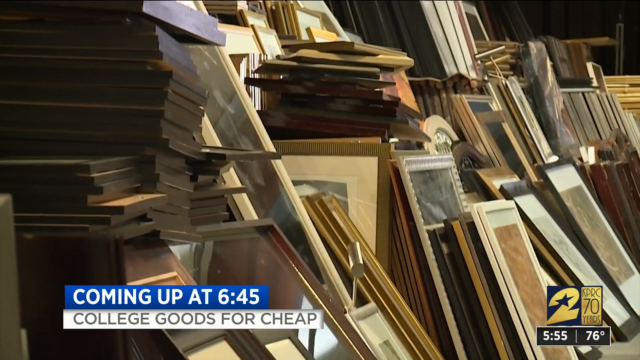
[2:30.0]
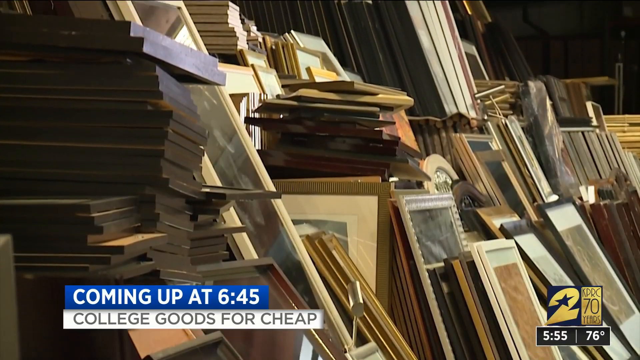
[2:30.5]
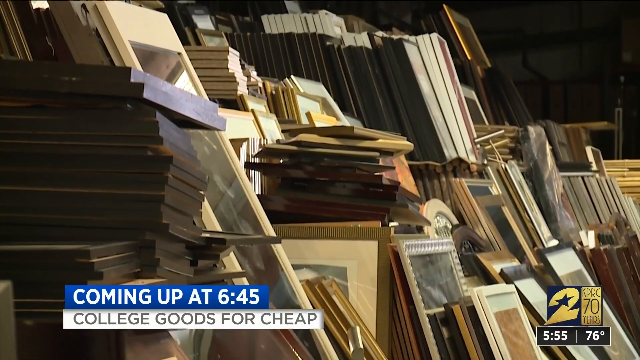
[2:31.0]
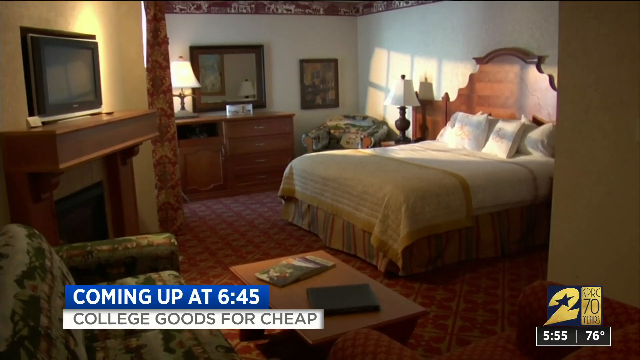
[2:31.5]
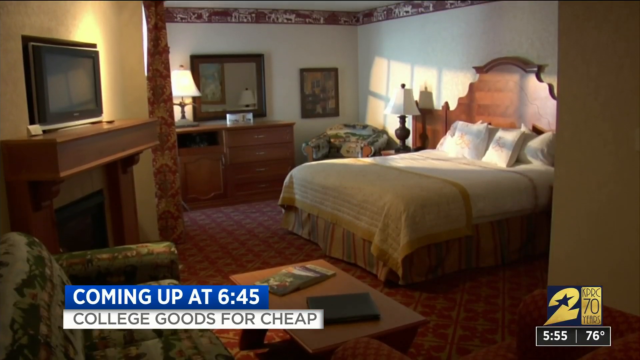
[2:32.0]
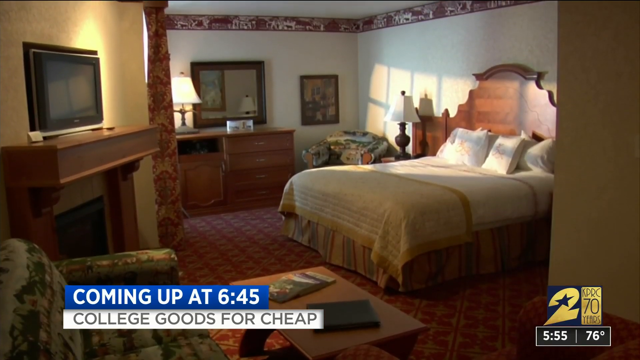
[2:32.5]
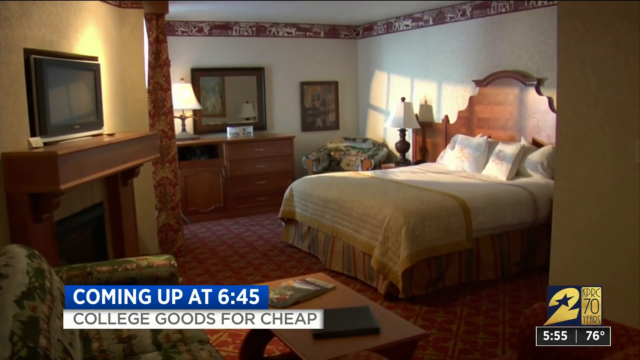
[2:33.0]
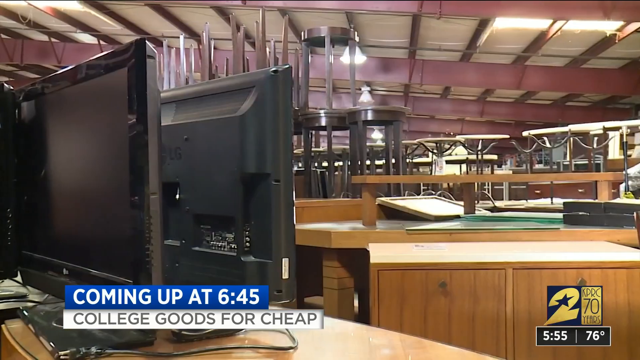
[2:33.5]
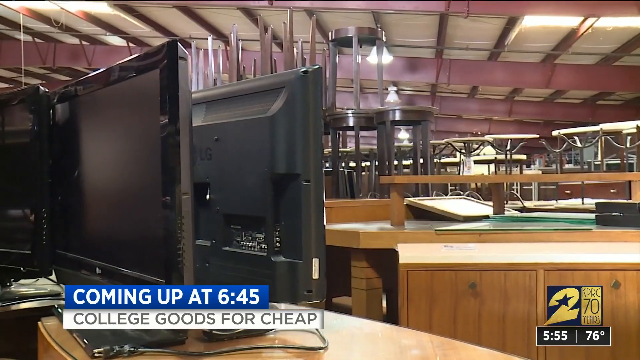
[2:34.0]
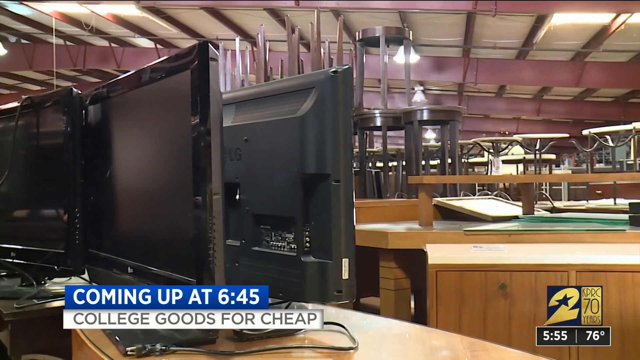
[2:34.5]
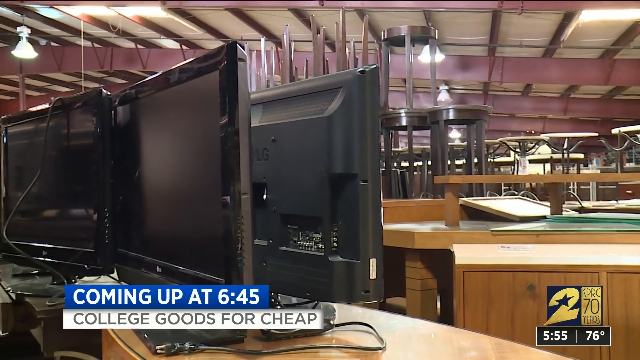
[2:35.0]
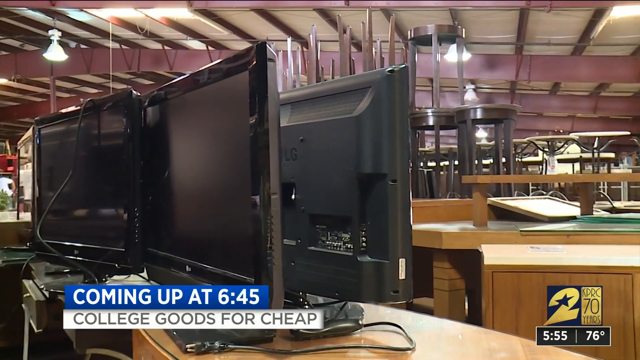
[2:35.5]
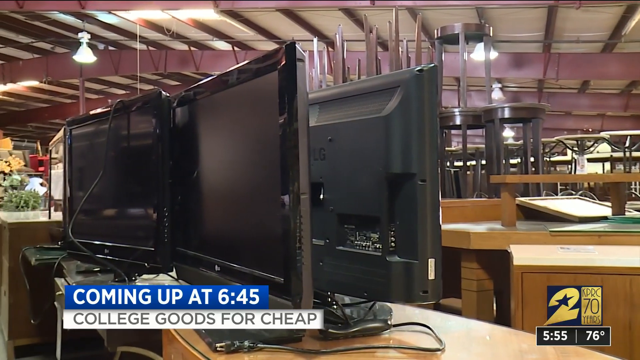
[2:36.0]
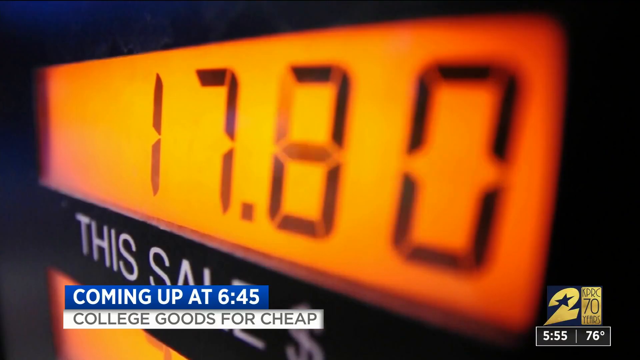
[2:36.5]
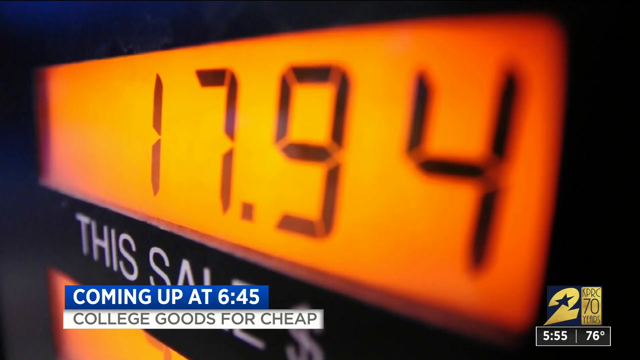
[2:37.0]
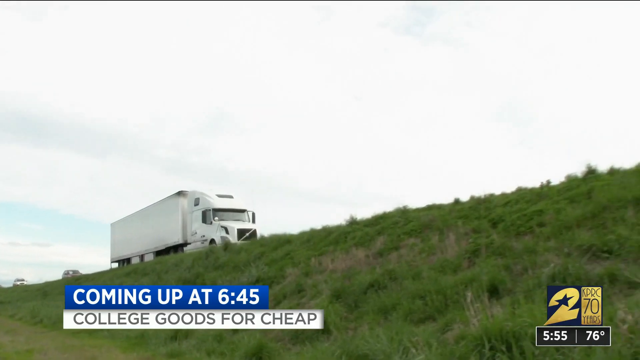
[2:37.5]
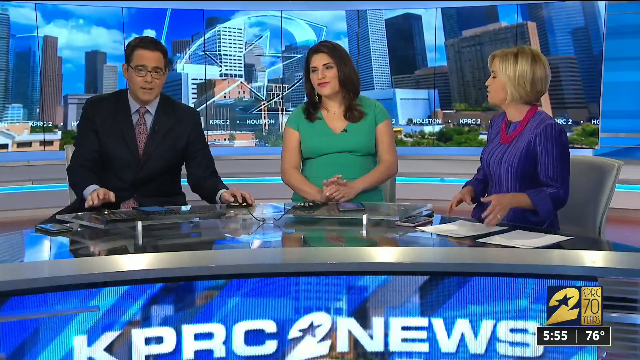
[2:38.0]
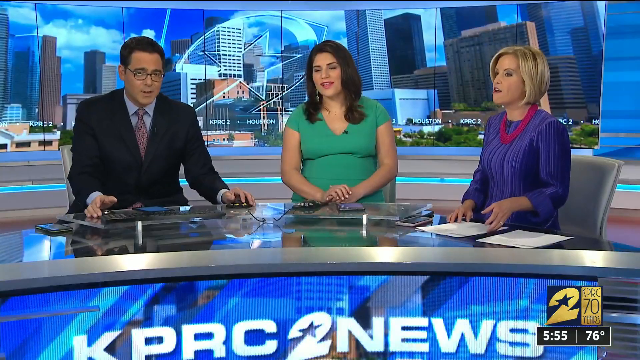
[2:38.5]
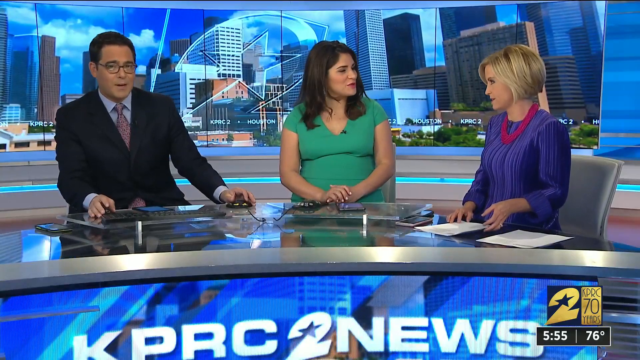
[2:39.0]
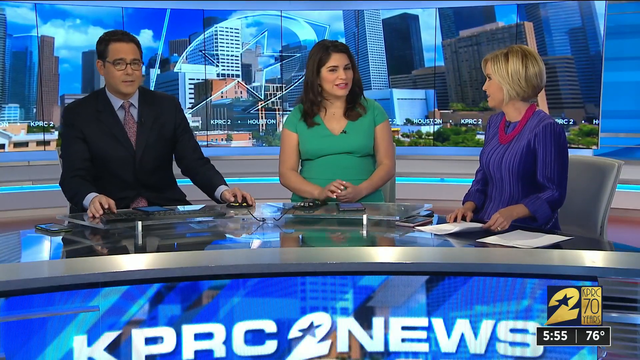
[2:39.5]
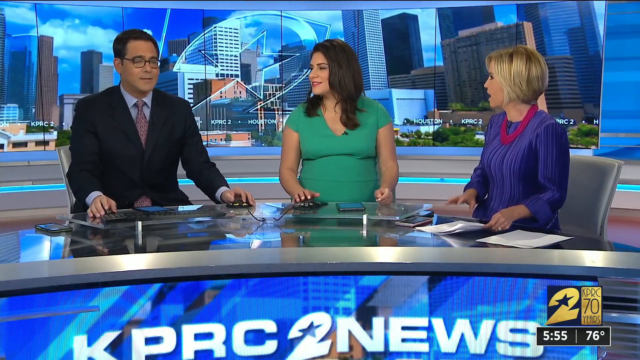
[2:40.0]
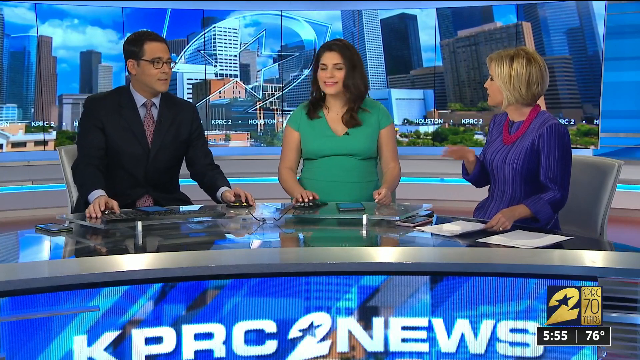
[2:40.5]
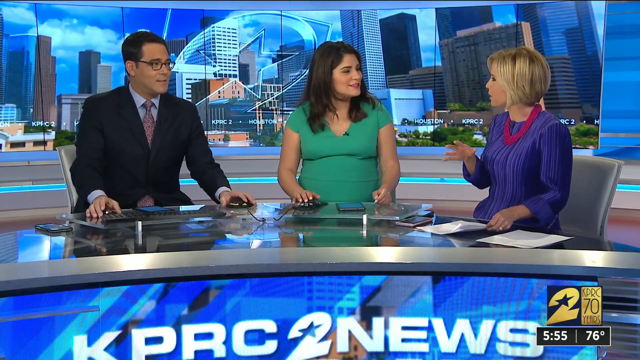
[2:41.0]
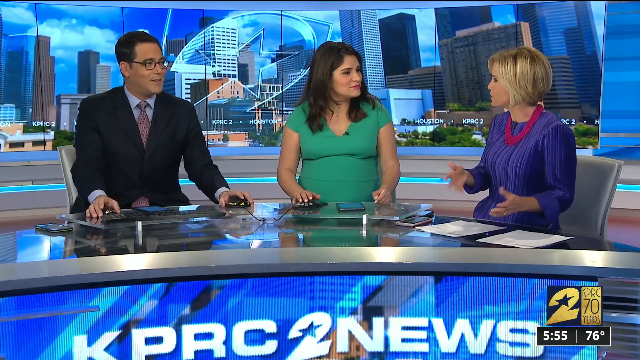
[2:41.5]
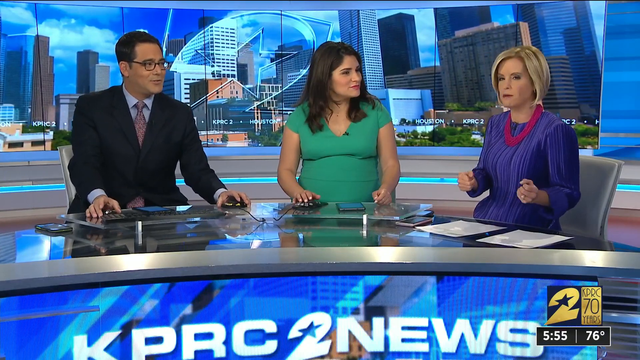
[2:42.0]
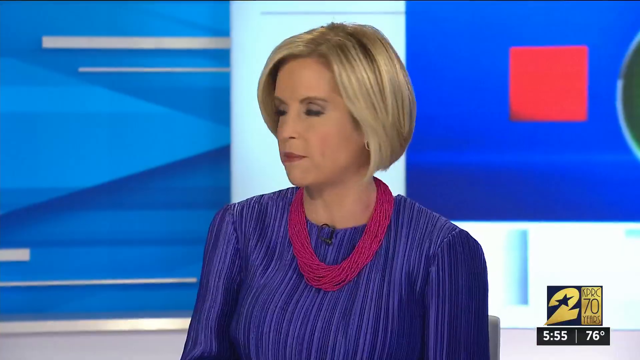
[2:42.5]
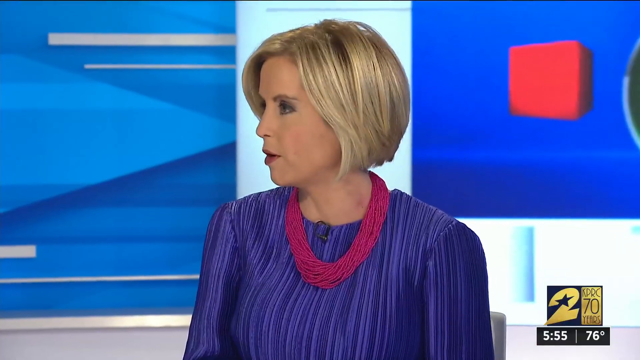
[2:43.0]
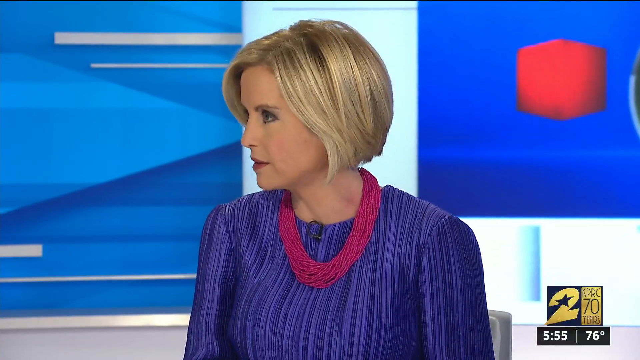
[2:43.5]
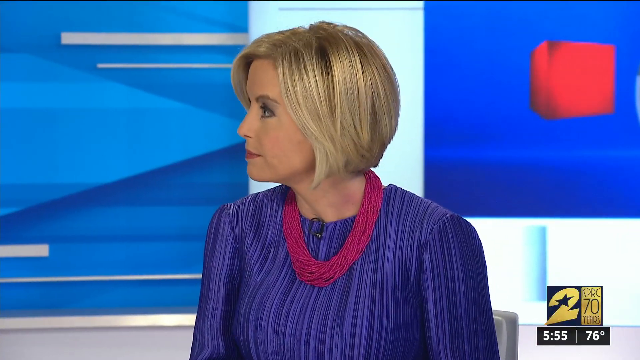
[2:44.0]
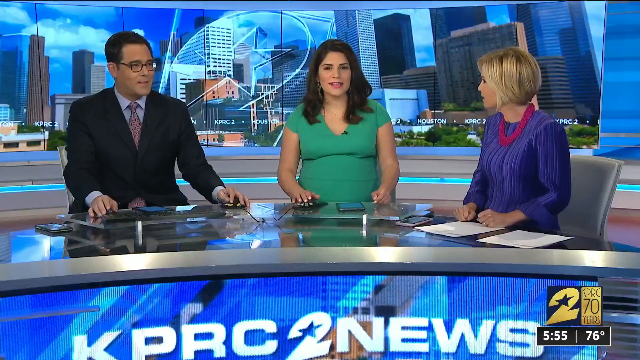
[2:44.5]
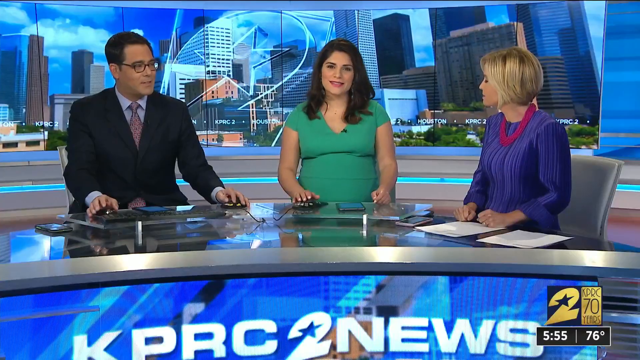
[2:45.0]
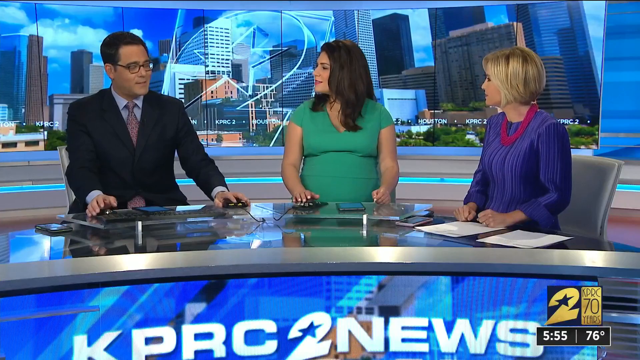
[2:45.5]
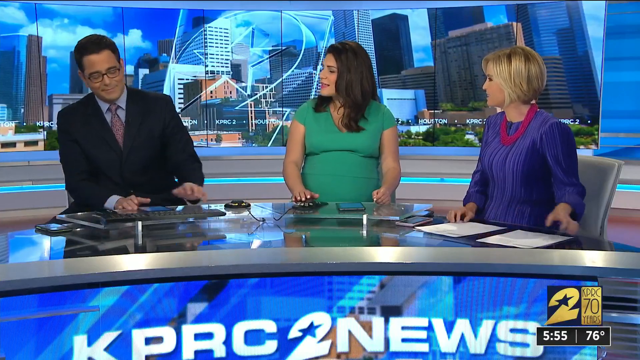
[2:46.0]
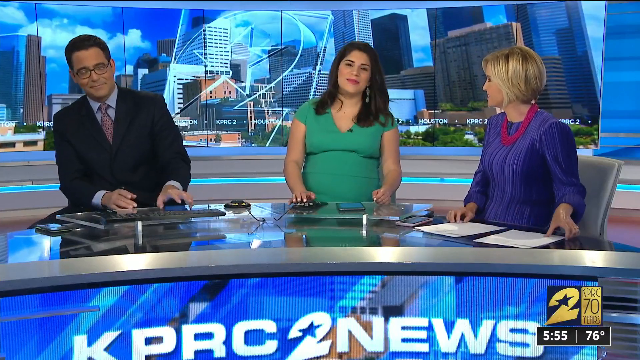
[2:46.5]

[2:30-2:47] In a store, a wall has many picture frames stacked on top of each other and leaning against the wall, and the camera pans up the big pile of frames. Then an image shows what looks to be a large bedroom with a wood headrest and white bed sheets, a large wooden fireplace, a dresser with a mirror above it and a lamp on it, and a small one-seater sofa. The carpet is kind of a dark red color with cream-colored circle designs. Next is what looks to be a store selling different furniture products; as the camera pans across the room, there are lots of stools stacked on top of each other for sale, small tabletops and TVs. A close-up shows the price on a gas pump going up from about $17 to about $18. Then a large white semi-truck with a big bed behind it drives along a road. The video goes back to the three news reporters sitting behind the desk: a man with dark brown hair and a black suit on the left, a woman with dark brown hair in a short-sleeved green V-neck blouse in the middle, and a woman with a blonde bob haircut in a long-sleeved purple blouse with a thick, dark pink necklace. The blonde woman seems to begin speaking first, then the man speaks, and the blonde woman responds as the other two reporters turn to look at her. A close-up shows the blonde woman in purple turned to the side speaking to her colleagues, and then the camera zooms out to show all three reporters. Behind them is a backdrop of the Houston skyline.